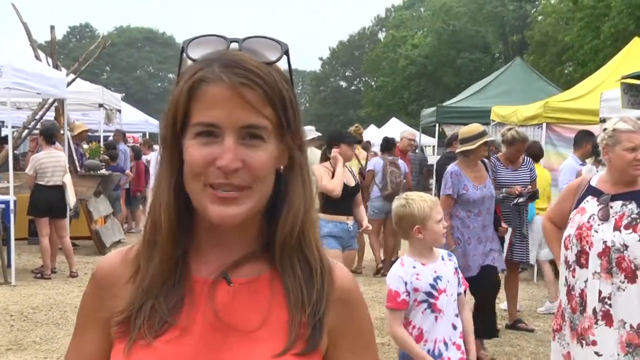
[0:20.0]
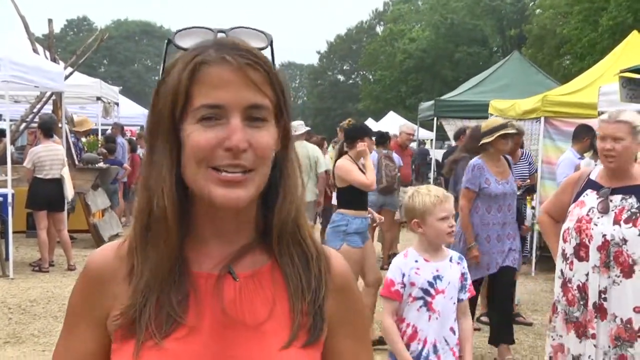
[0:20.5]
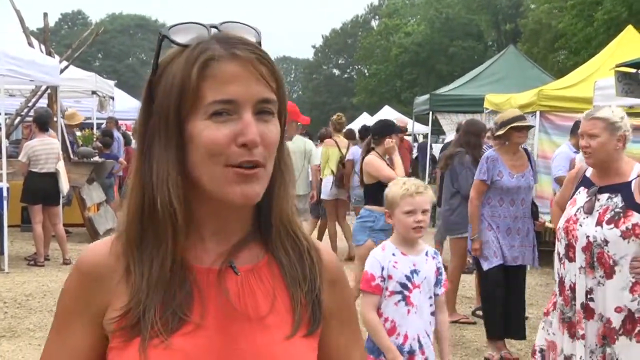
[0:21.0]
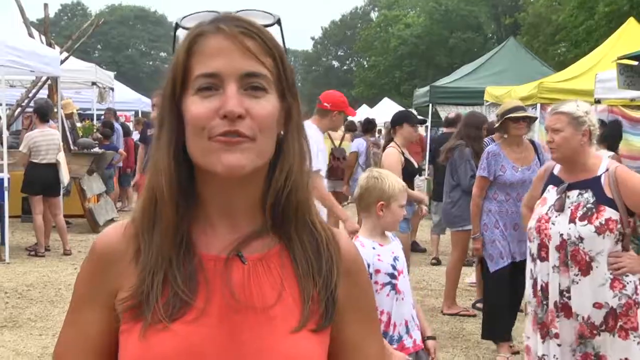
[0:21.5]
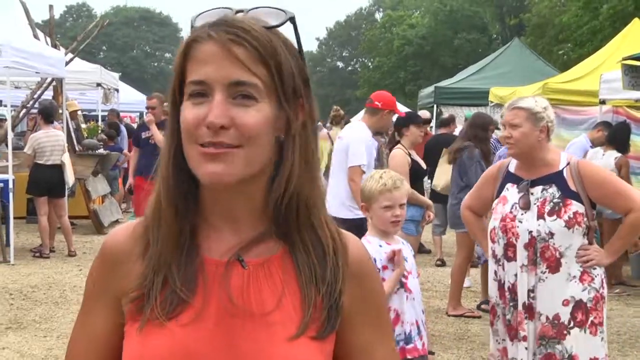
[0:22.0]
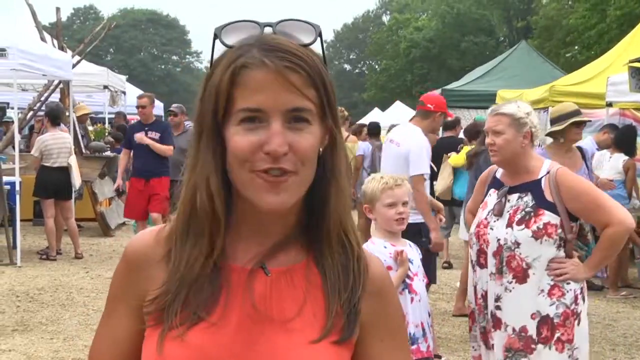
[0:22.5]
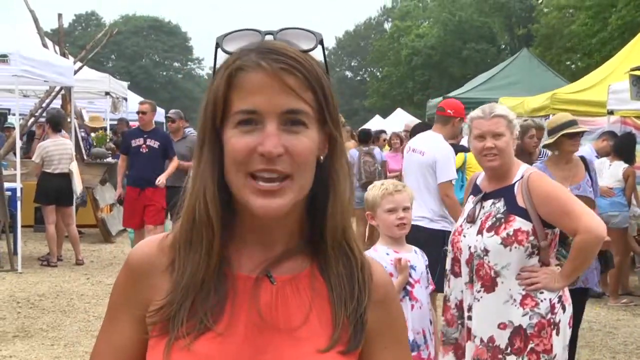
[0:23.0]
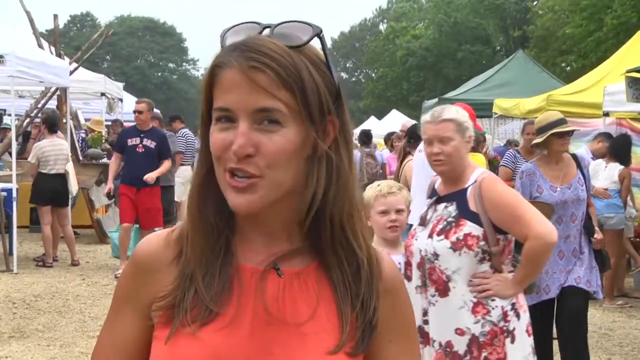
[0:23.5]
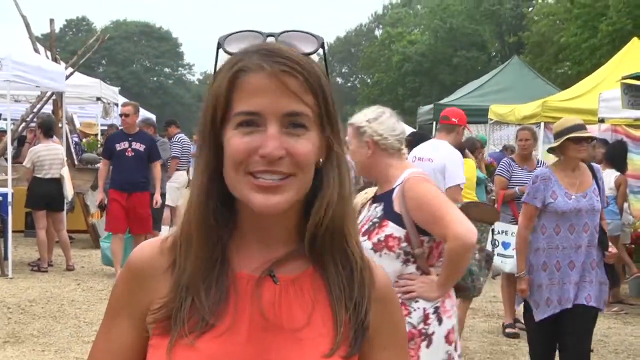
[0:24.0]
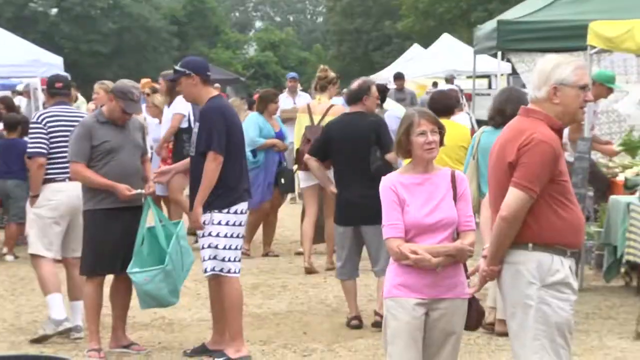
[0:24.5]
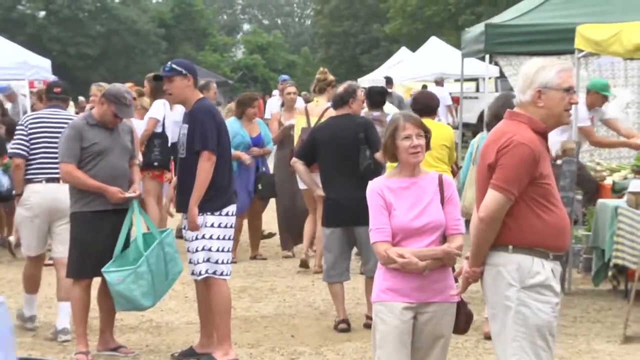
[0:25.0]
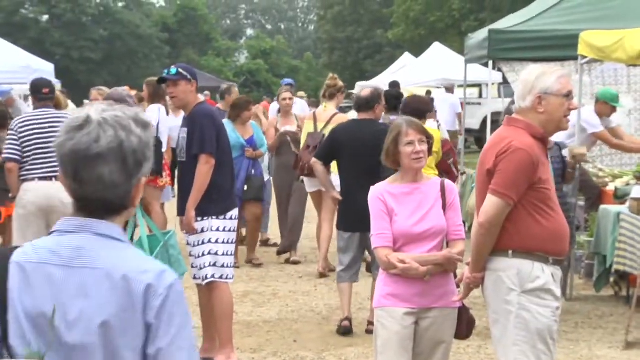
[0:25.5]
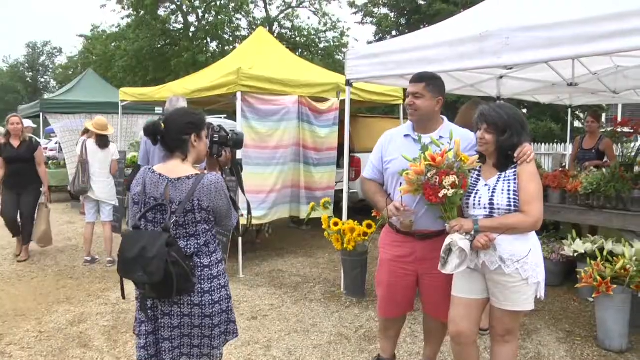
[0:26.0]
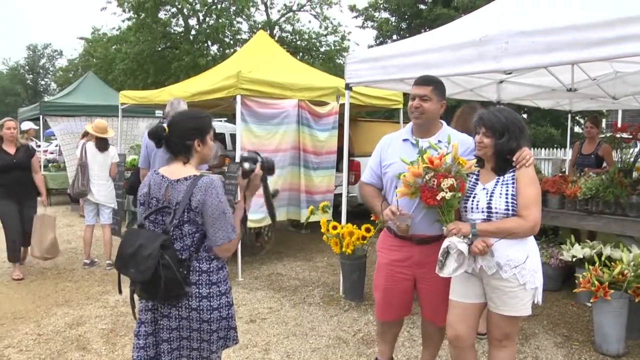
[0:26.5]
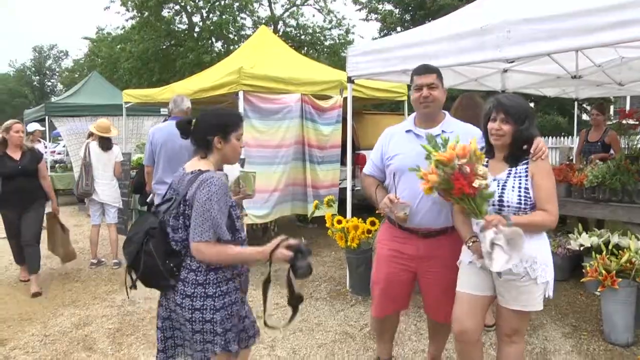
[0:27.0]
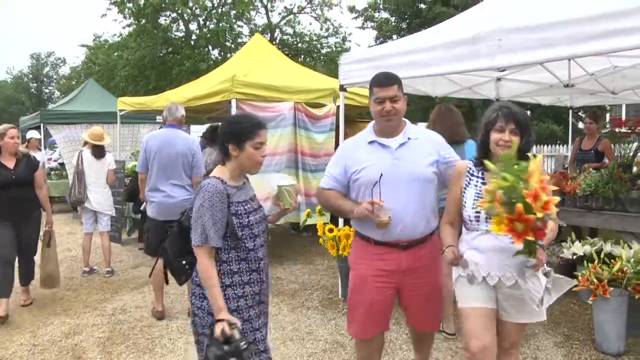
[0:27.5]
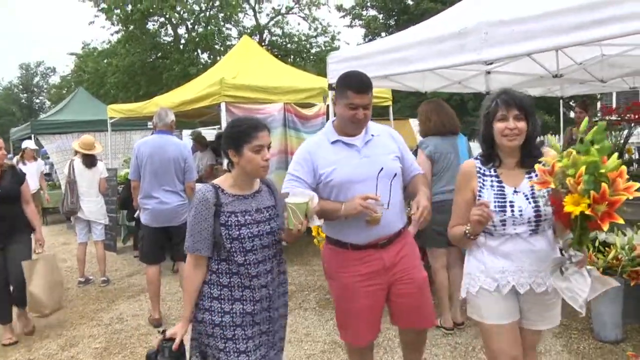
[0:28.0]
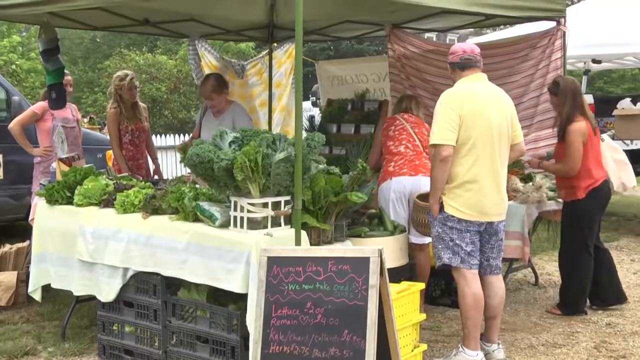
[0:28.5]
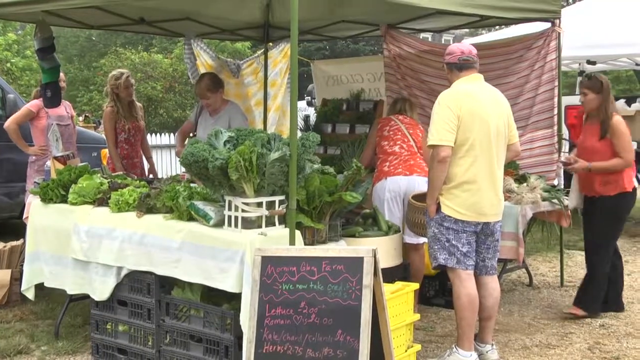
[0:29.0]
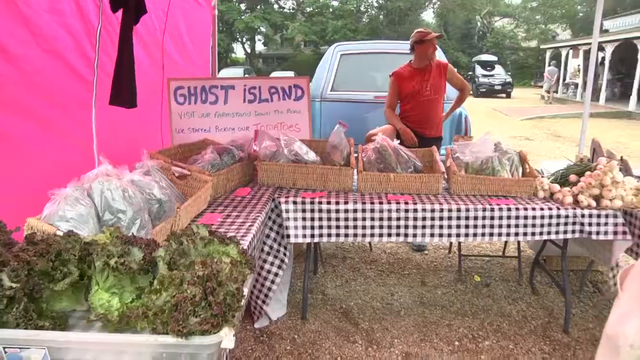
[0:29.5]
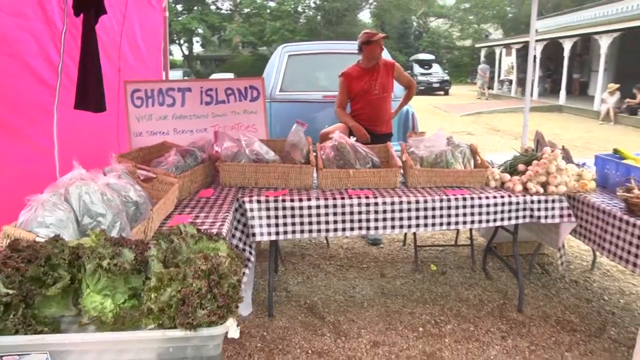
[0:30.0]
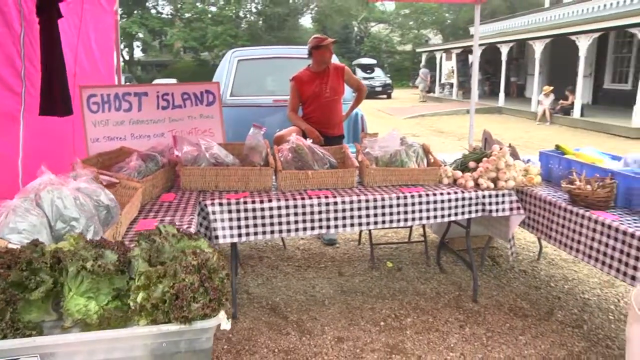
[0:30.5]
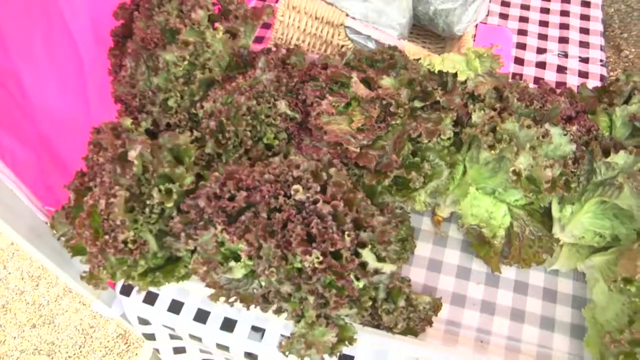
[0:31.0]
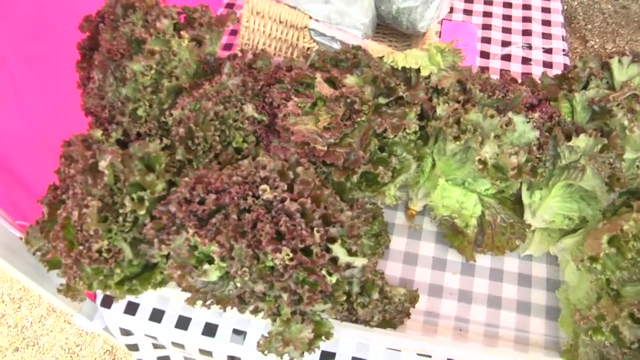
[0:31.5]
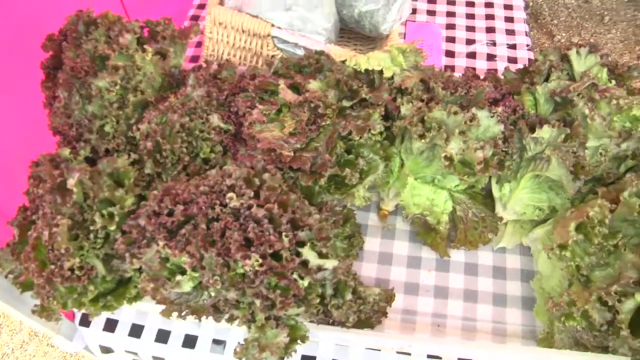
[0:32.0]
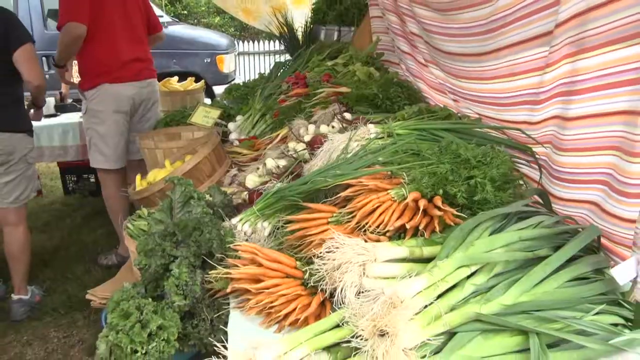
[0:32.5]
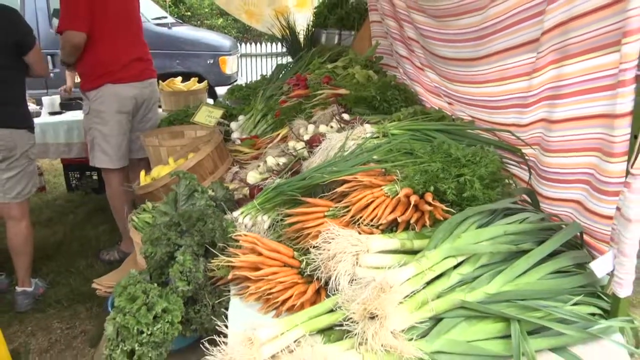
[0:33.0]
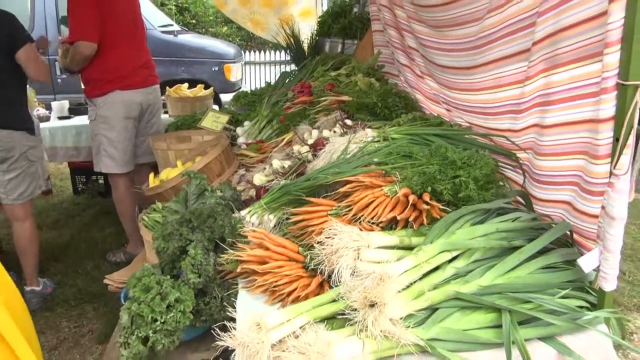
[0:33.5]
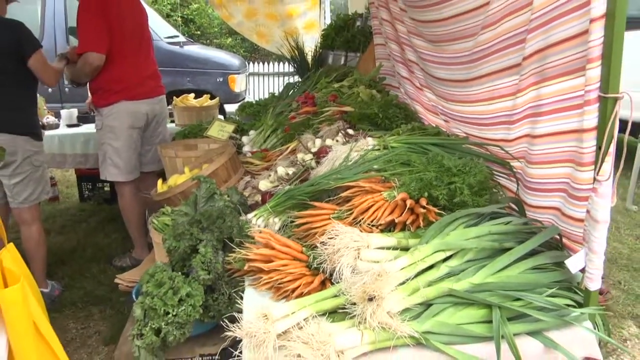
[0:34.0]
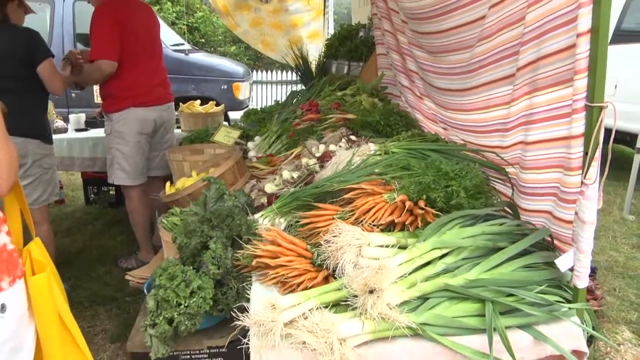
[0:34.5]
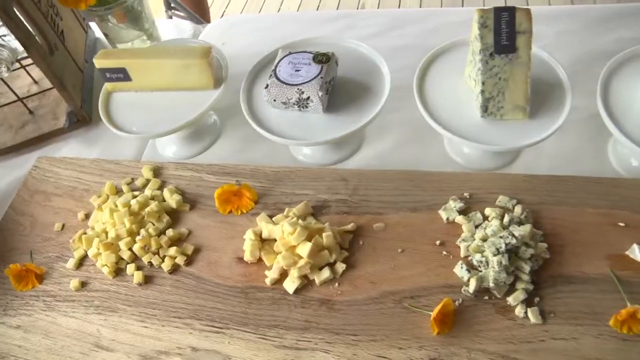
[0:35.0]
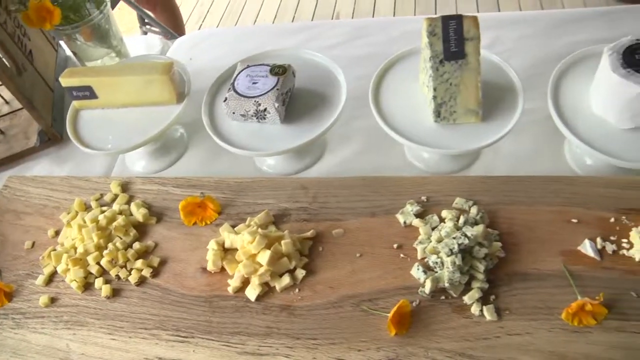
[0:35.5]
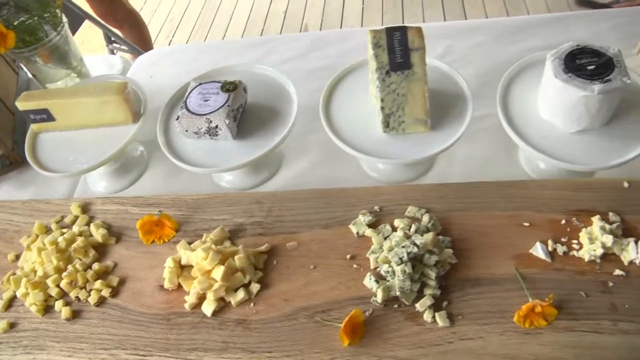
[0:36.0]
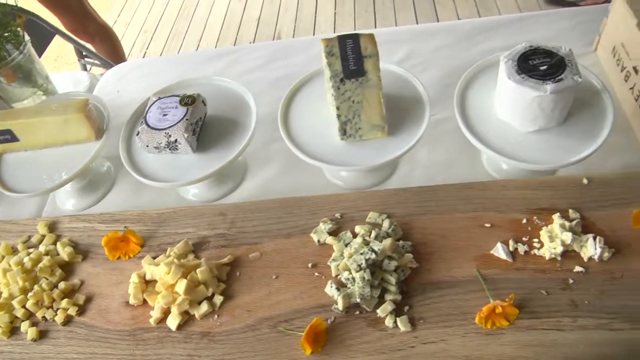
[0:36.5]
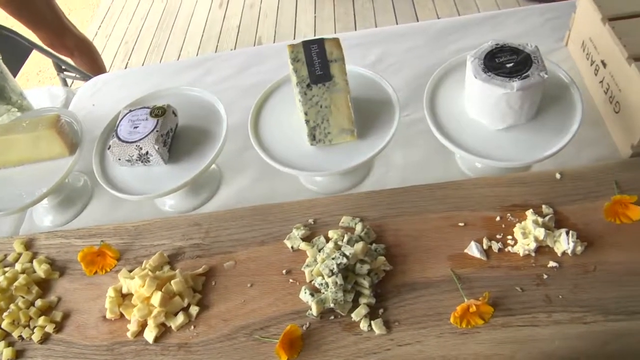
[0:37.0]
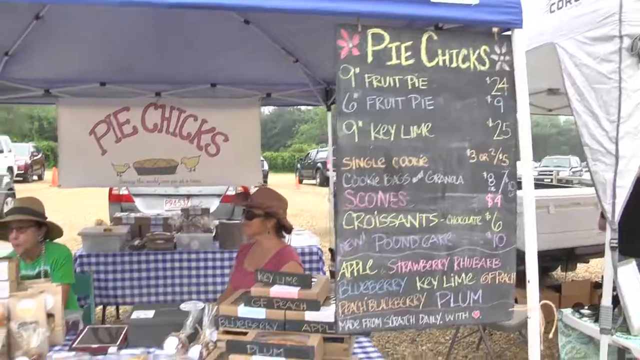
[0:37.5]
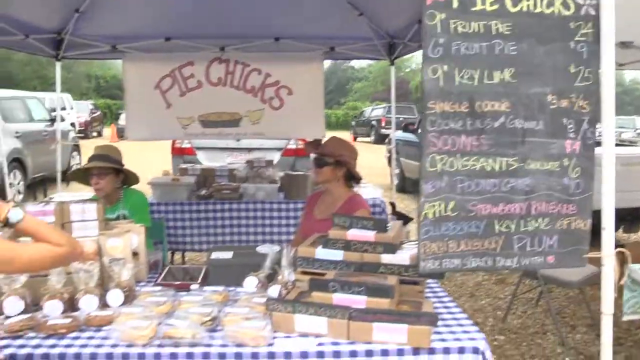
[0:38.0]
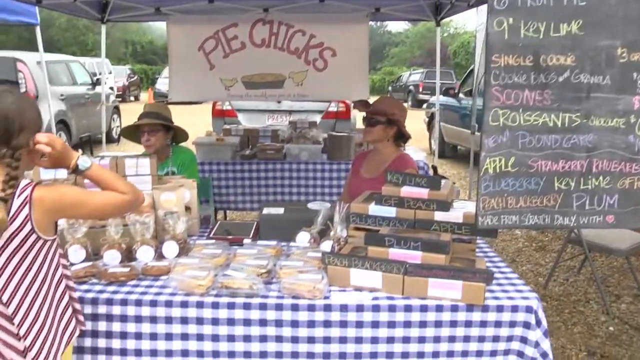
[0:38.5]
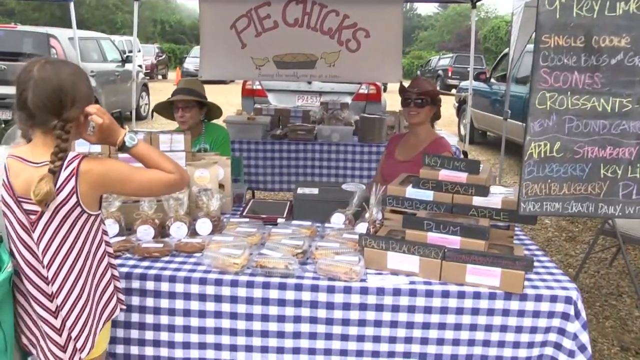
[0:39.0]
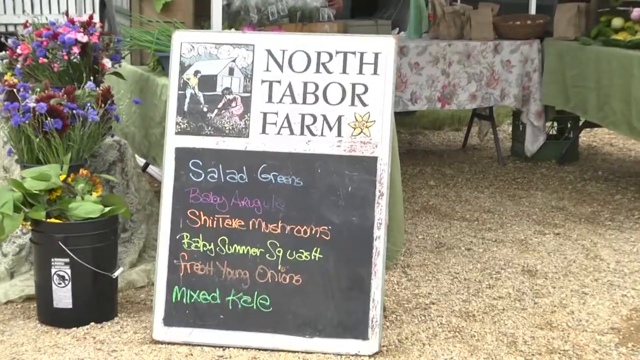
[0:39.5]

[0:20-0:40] Genevieve Kramer talks in front of the camera. She has glasses on her head and long, shoulder-length brown hair, and wears a sleeveless red dress. The scene cuts to bustling people looking at the various stalls, all in summery clothing: a man wears a cap, glasses and shorts, and others wear sandals, short sleeves and trousers. An Asian lady takes a picture of two Asian people holding some flowers from the flower stall, photographing them in front of the stall. A stall has green vegetables for sale, with a blackboard listing the items and the name Ghost Island; leeks, carrots and other fresh vegetables are available. A stall sells various cheeses, all cut up and available to try. Another stall, Pie Chicks, has various pies for sale, including fruit pie and blueberry, along with scones and croissants.